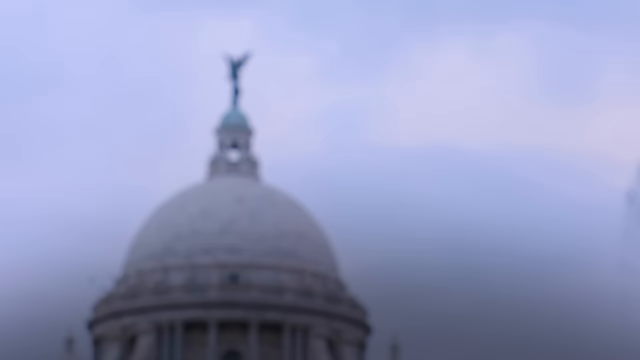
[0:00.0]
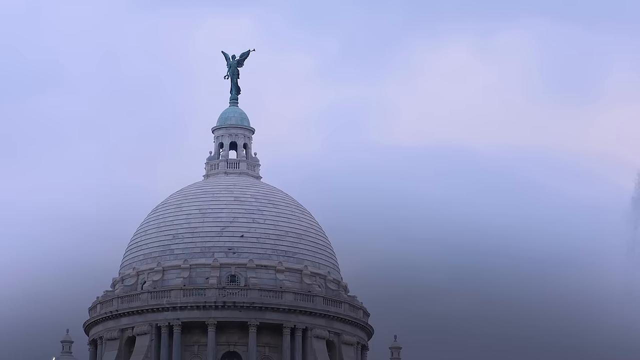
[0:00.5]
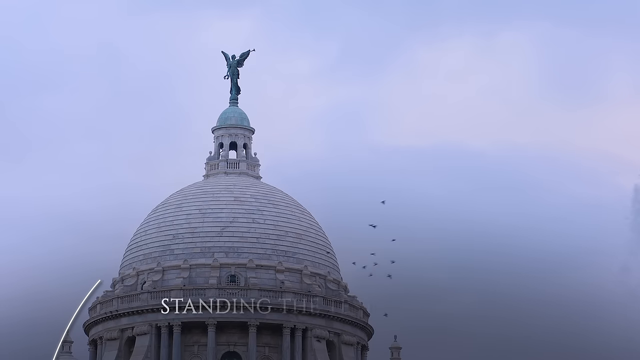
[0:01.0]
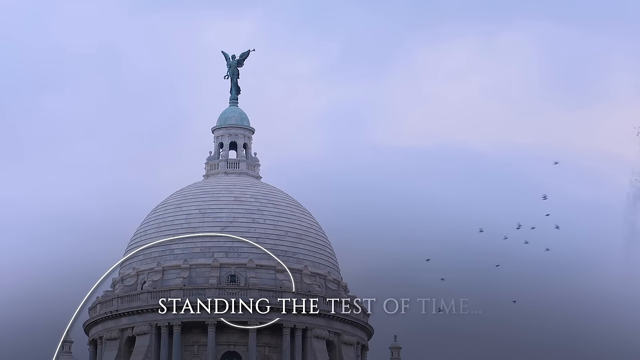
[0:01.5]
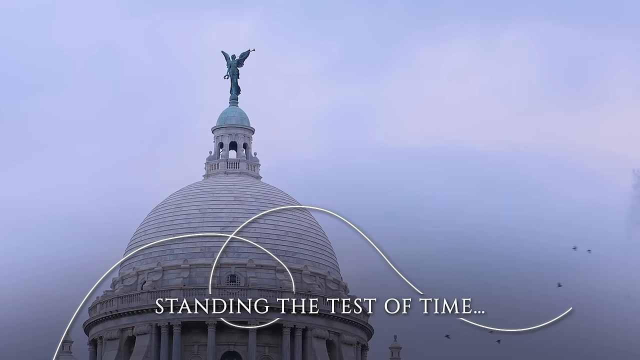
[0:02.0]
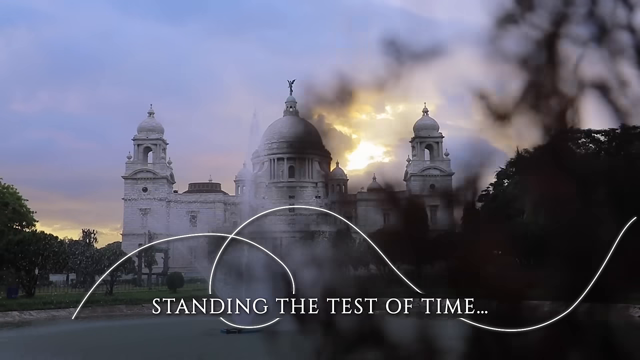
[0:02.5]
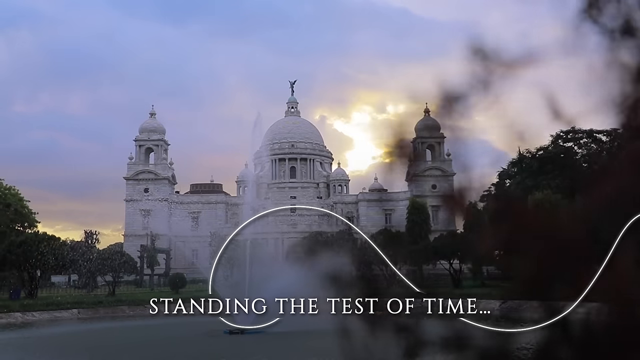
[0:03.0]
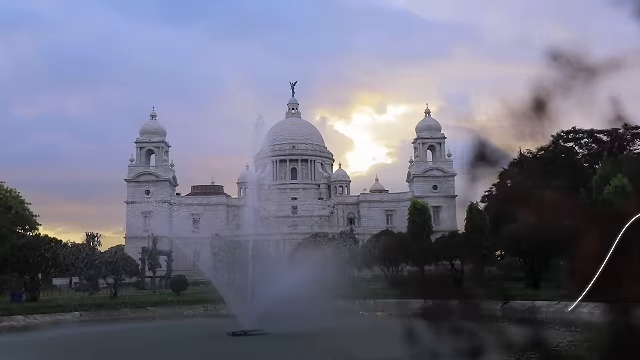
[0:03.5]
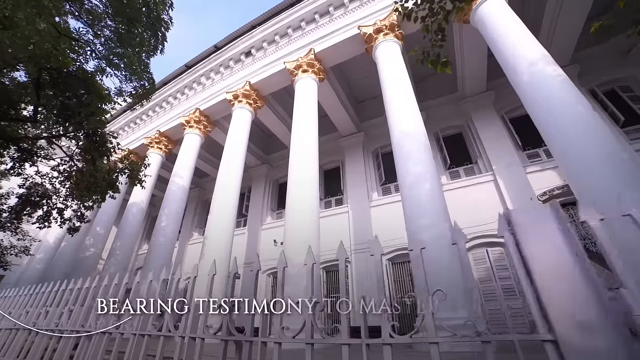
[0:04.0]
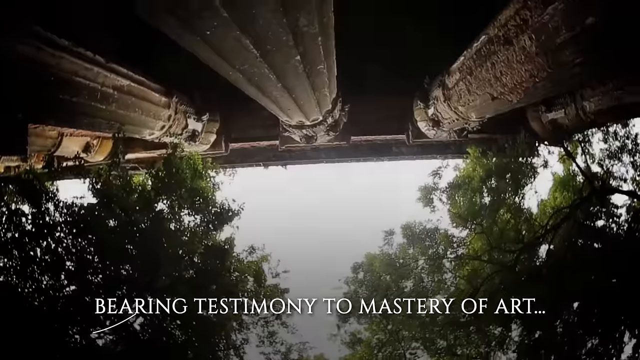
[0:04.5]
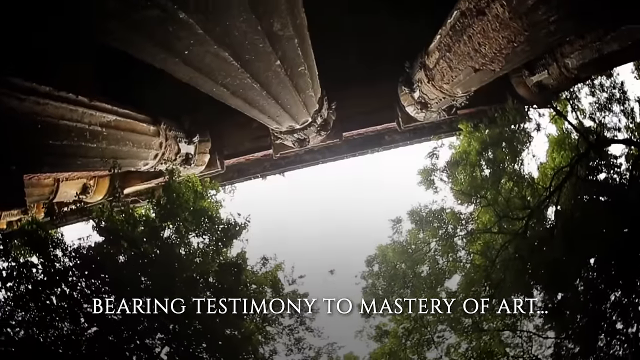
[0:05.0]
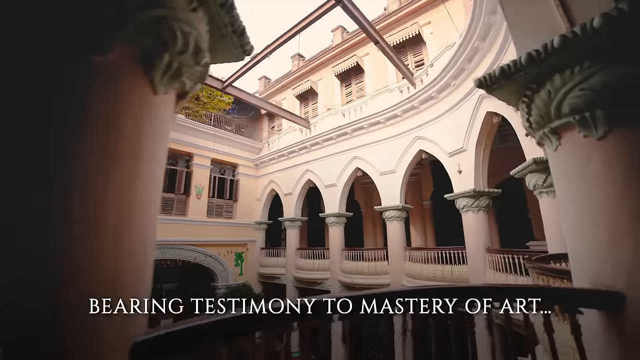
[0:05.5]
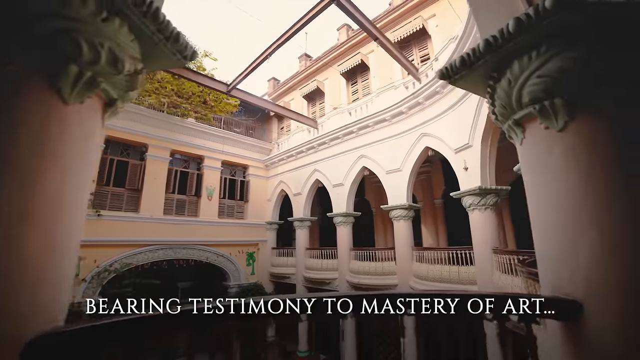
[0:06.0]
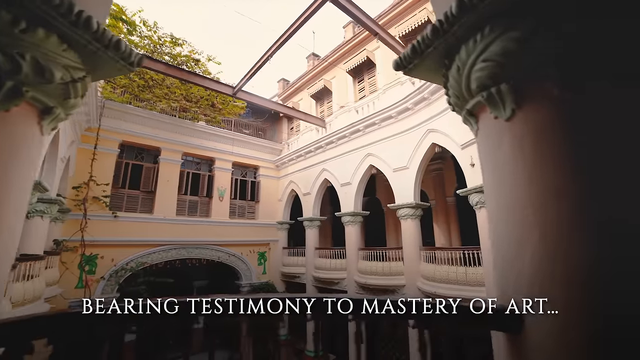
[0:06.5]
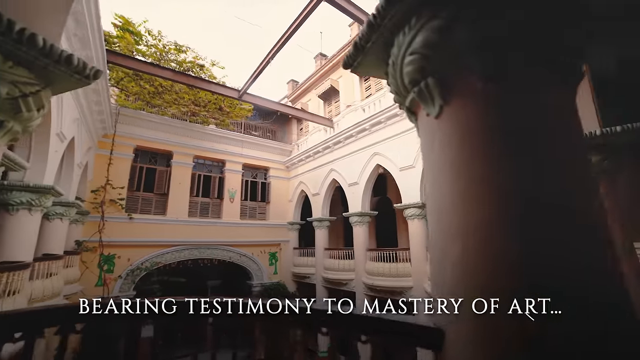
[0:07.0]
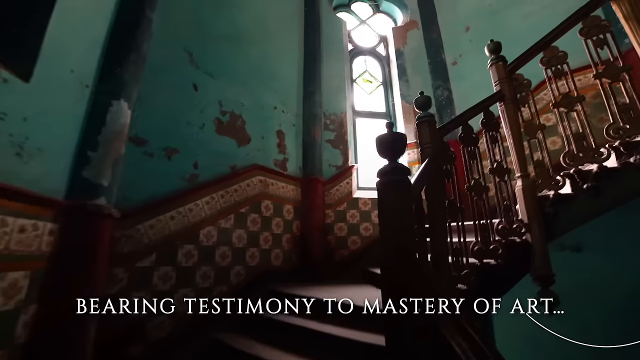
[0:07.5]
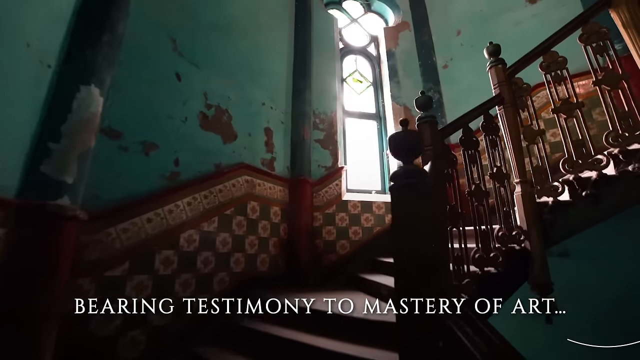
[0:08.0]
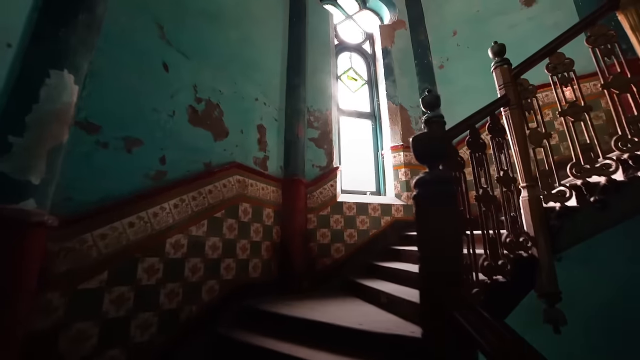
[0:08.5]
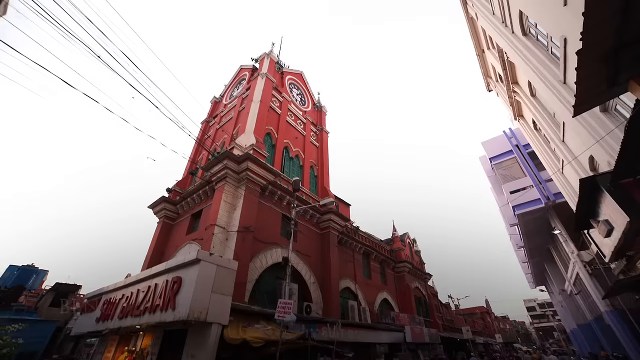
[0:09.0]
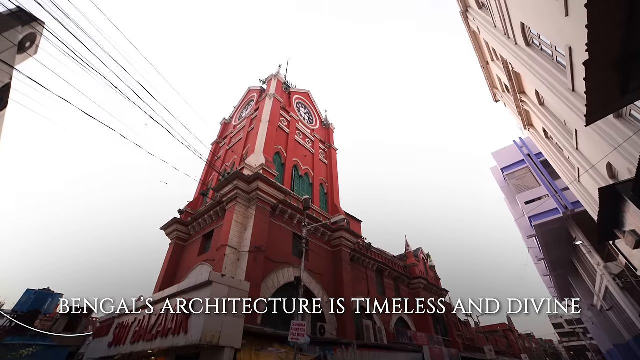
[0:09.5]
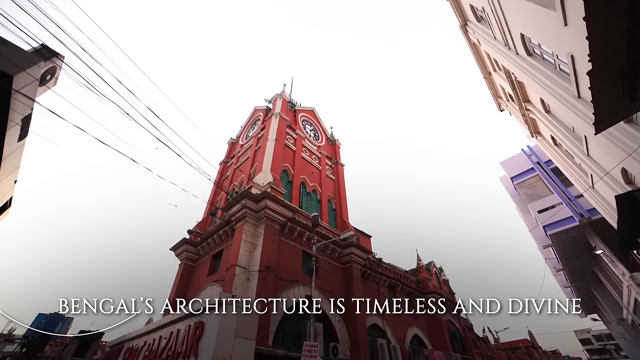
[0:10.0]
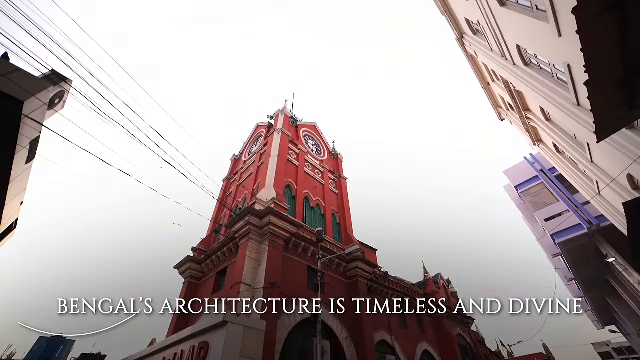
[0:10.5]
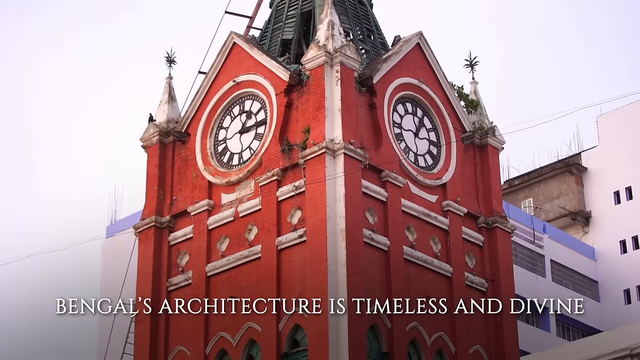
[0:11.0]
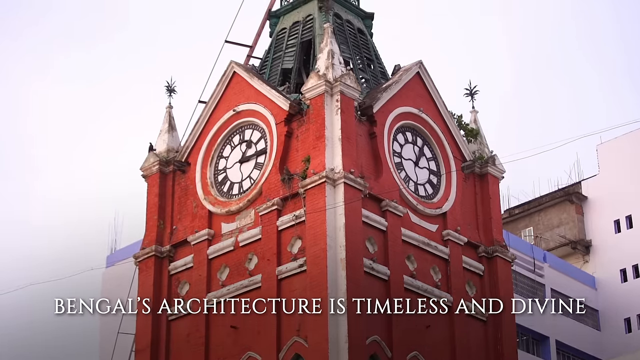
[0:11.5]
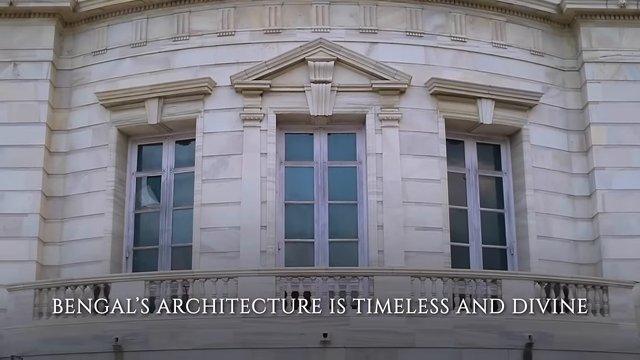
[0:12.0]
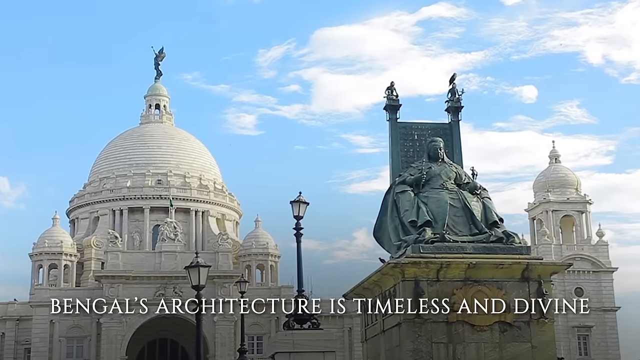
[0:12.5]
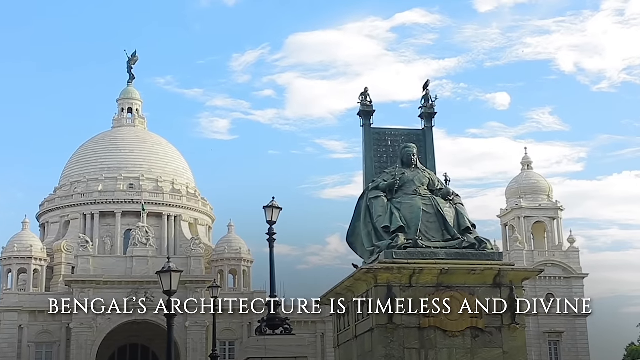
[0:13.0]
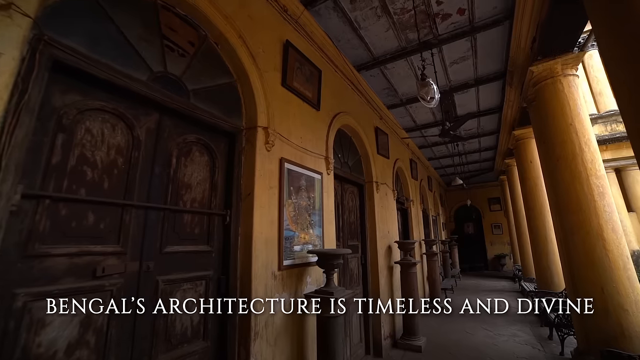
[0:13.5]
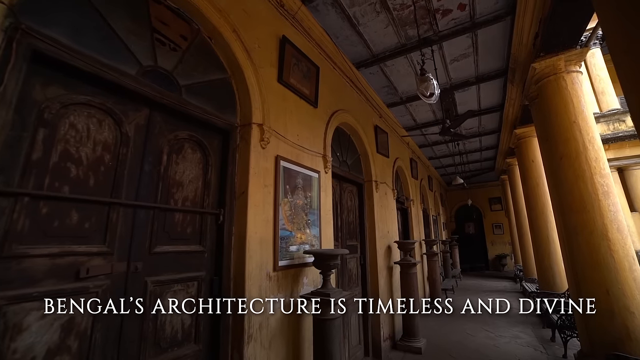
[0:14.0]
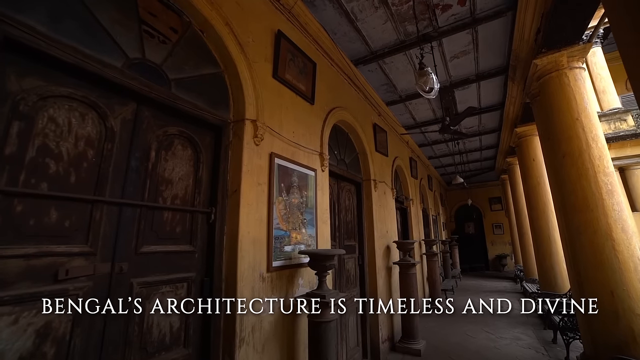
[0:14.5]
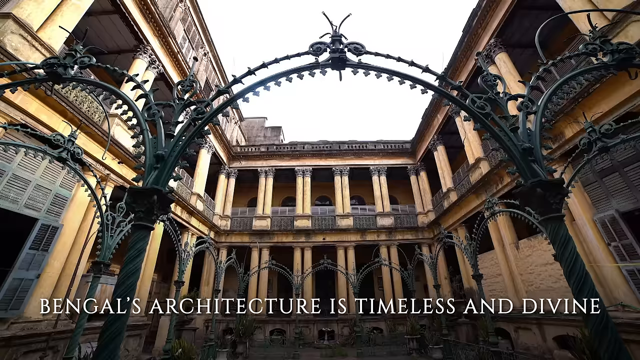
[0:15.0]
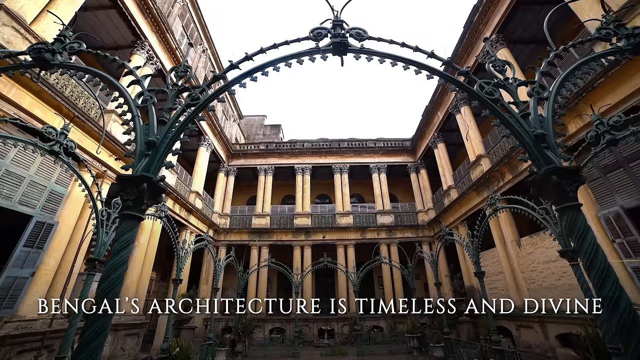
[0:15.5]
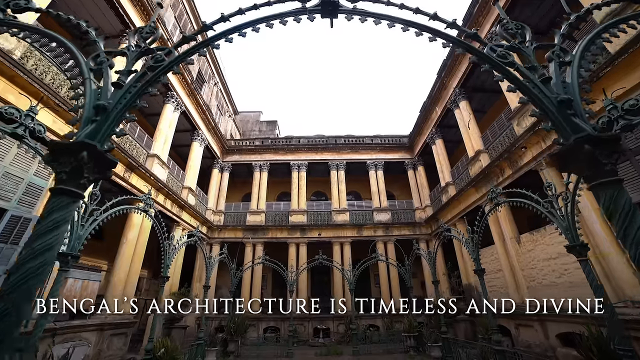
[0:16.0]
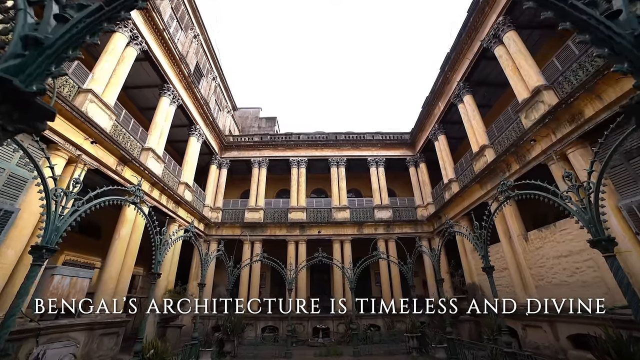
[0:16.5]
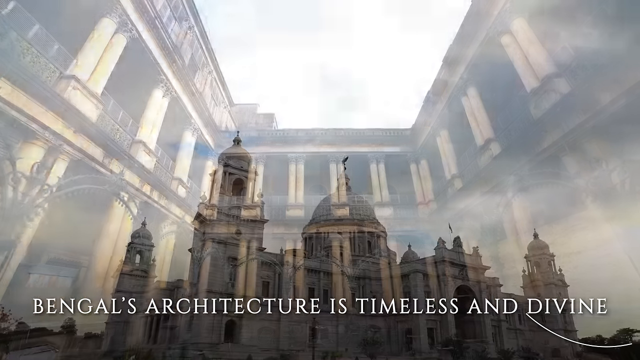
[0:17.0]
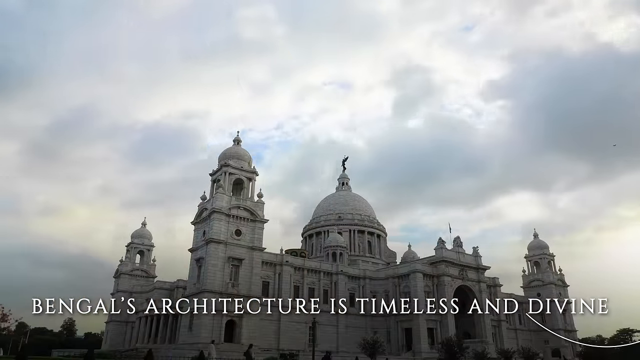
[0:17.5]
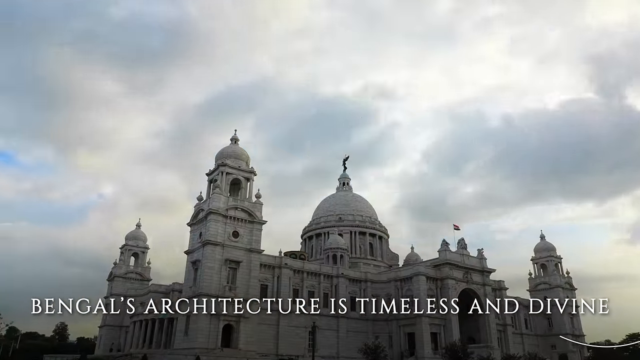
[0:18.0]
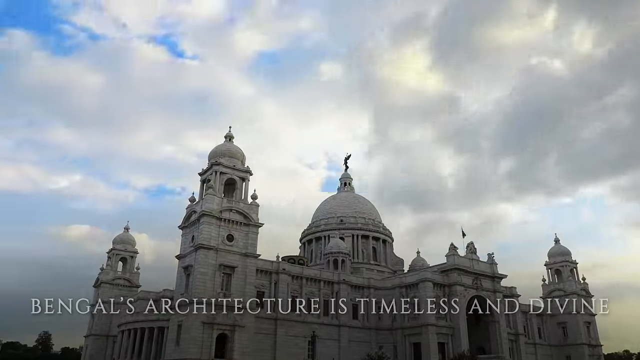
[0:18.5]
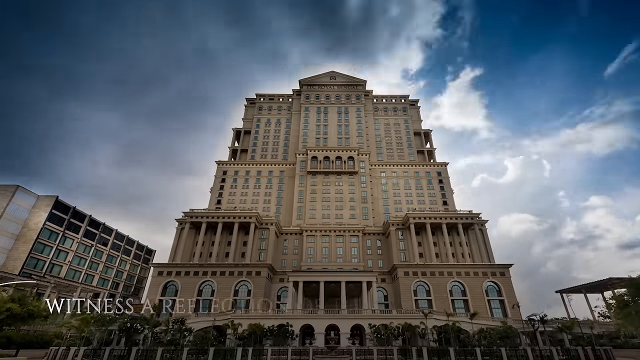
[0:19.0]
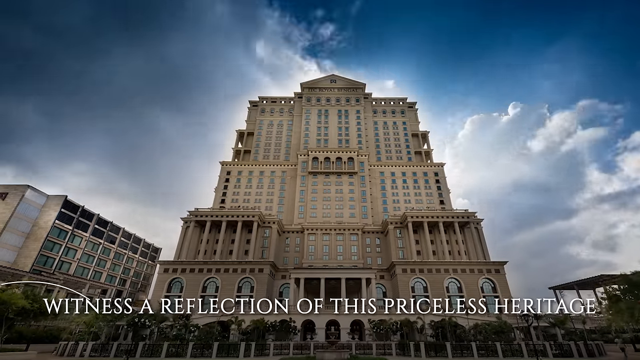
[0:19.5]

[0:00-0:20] The video opens by zooming in on a domed building whose cupola holds a winged statue of an angel made of some kind of green metal. The view zooms out as white text at the bottom reads "standing the test of time." In a slow pan, the camera zooms in toward the front of the building, showing it from a ground angle. In front of the building is a white-painted fence topped with multiple triangular spikes, and the building has multiple tall white pillars with gold gilding holding the ceiling. The scene shifts to an image of a ruined building with similar pillars, with white text at the bottom reading "bearing testimony to the master of art." The view then zooms into a courtyard, presumably inside that building since it has the same architecture, with the same text at the bottom.